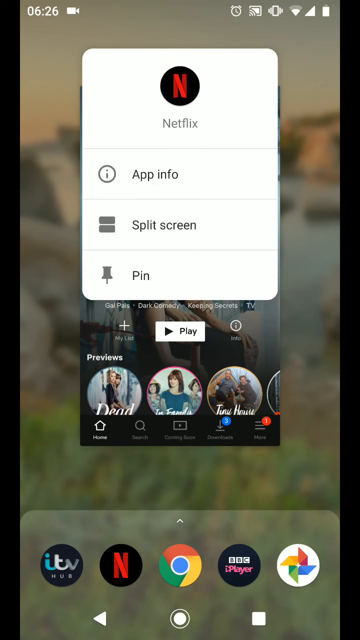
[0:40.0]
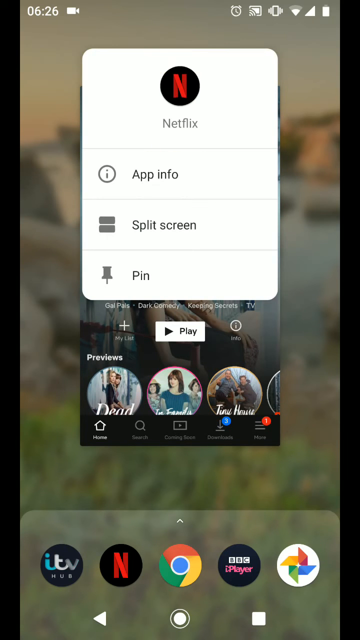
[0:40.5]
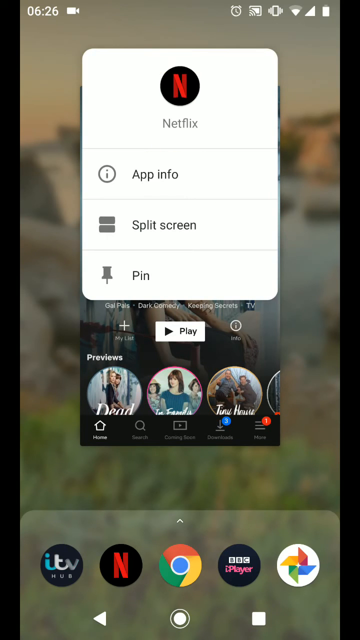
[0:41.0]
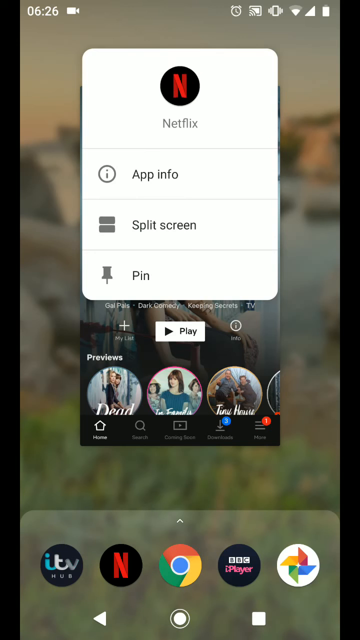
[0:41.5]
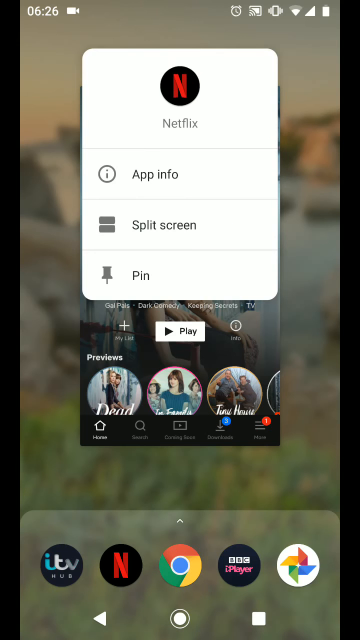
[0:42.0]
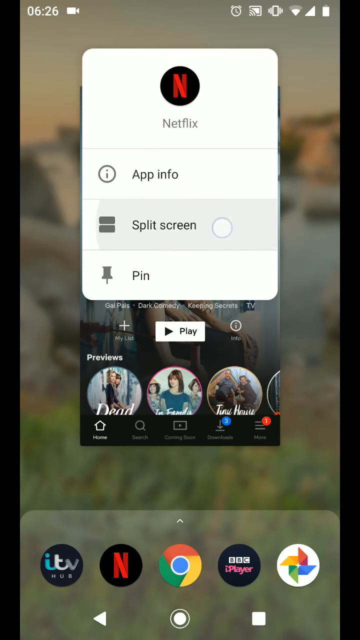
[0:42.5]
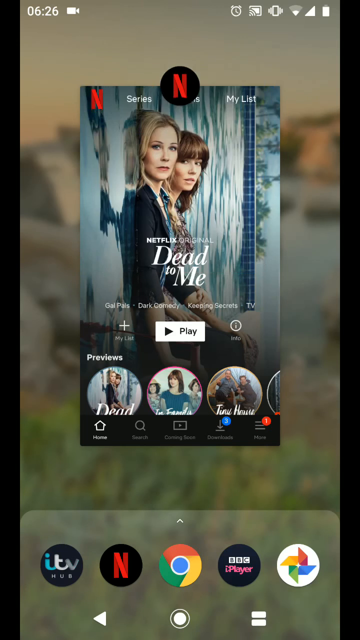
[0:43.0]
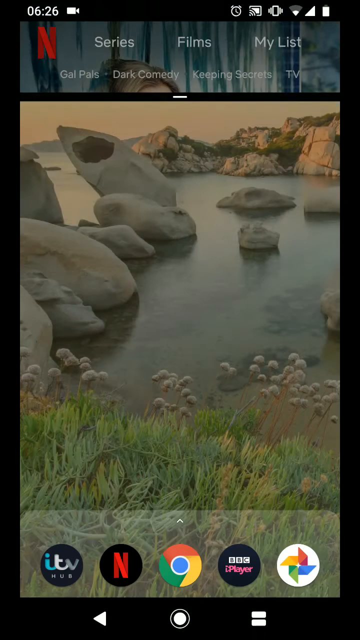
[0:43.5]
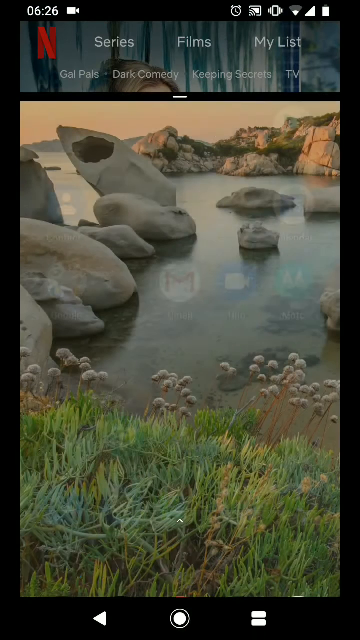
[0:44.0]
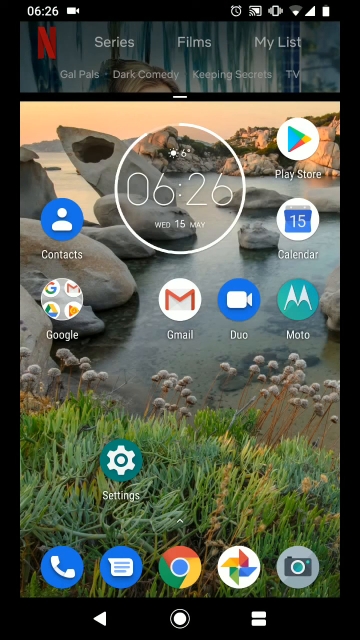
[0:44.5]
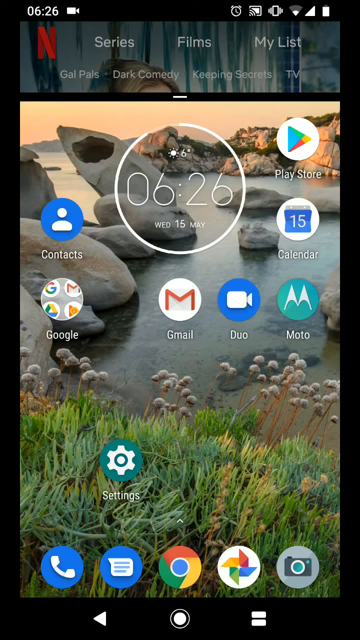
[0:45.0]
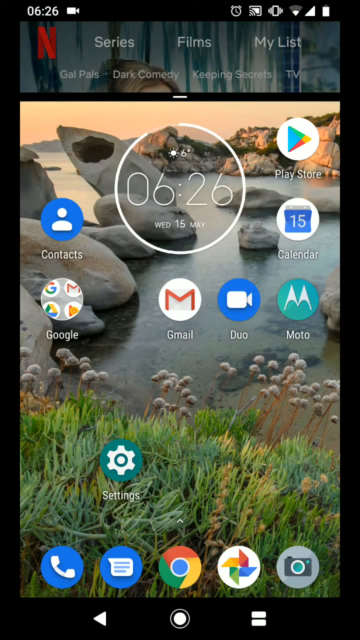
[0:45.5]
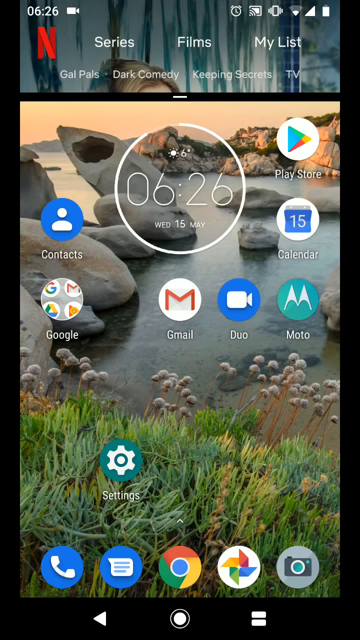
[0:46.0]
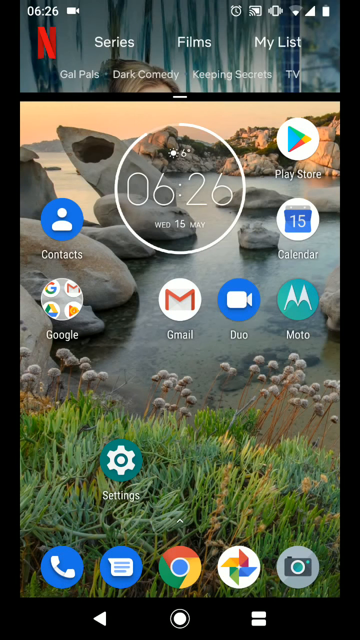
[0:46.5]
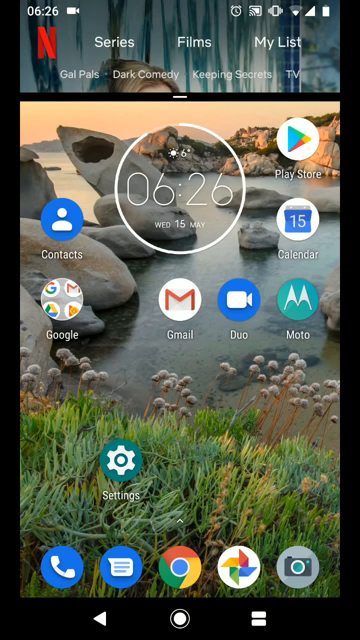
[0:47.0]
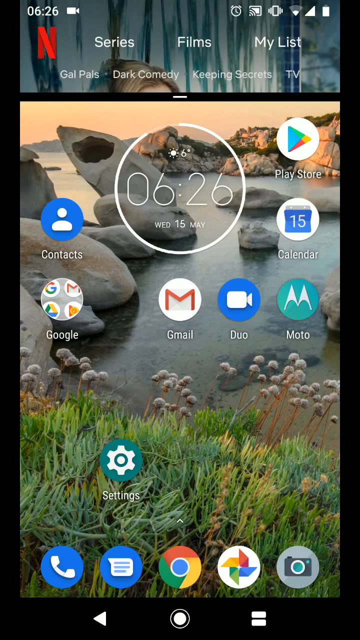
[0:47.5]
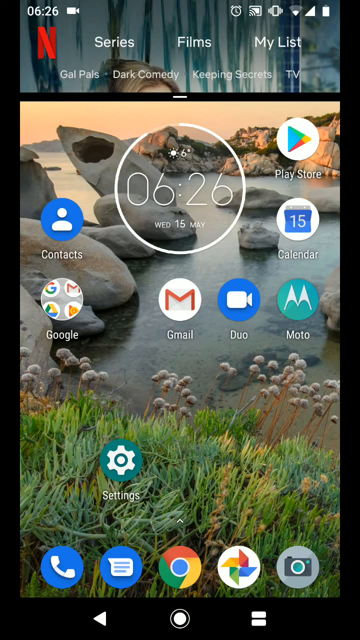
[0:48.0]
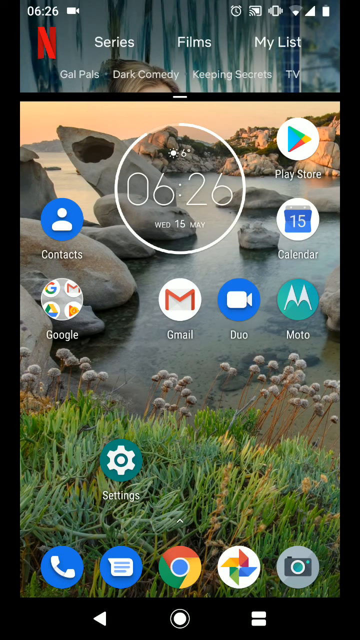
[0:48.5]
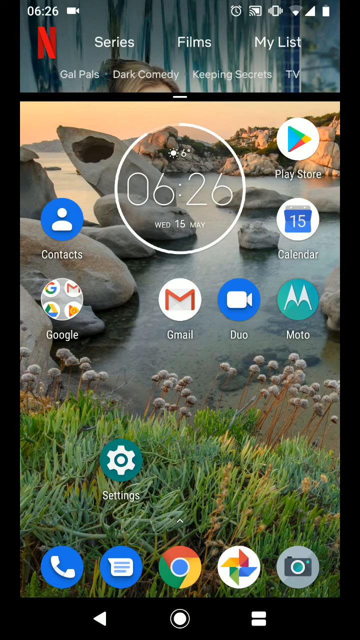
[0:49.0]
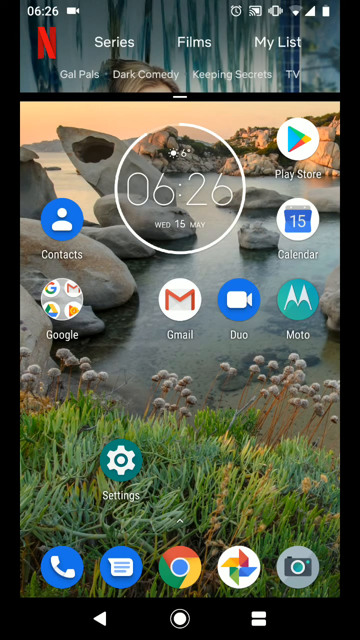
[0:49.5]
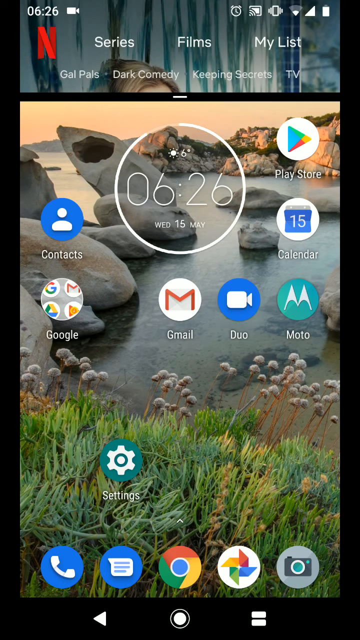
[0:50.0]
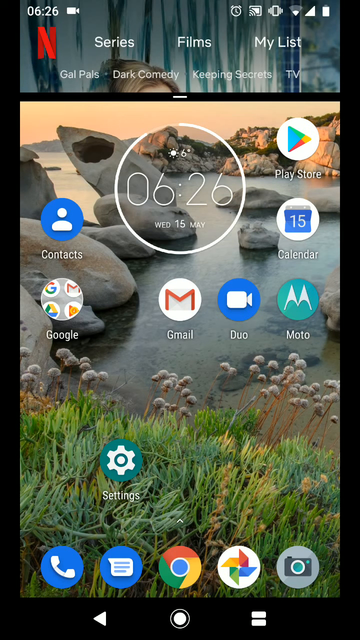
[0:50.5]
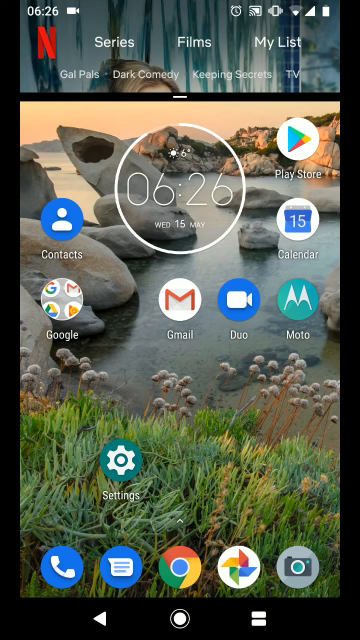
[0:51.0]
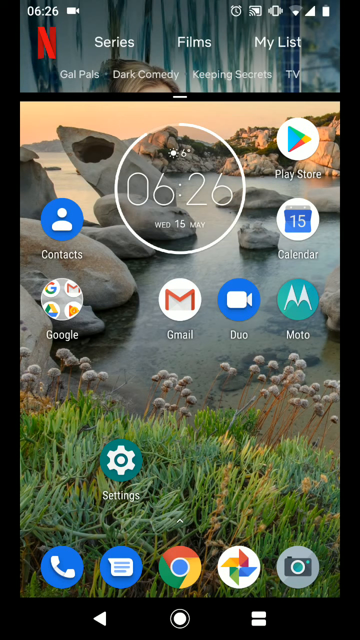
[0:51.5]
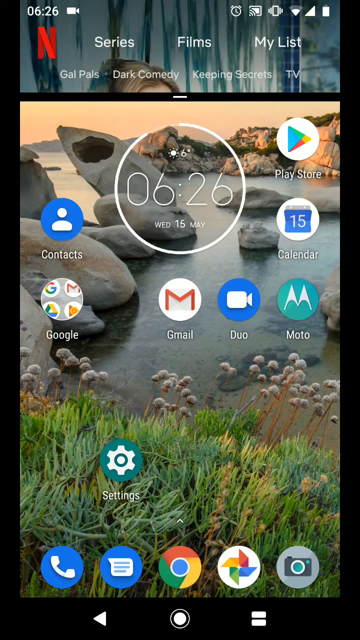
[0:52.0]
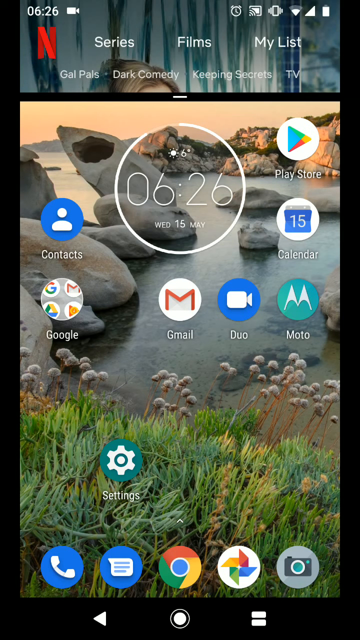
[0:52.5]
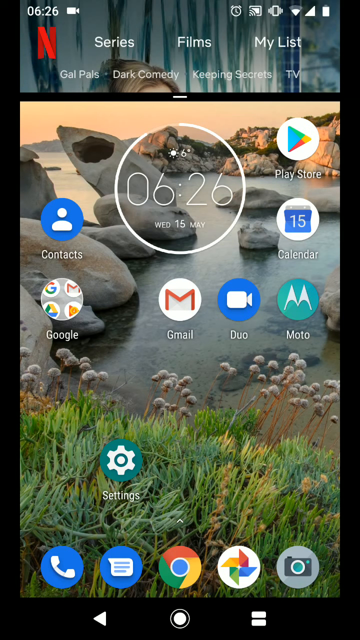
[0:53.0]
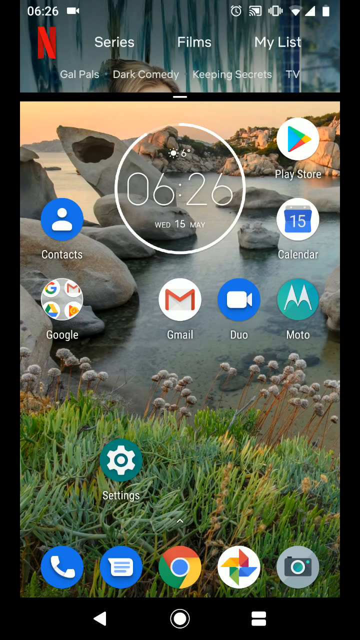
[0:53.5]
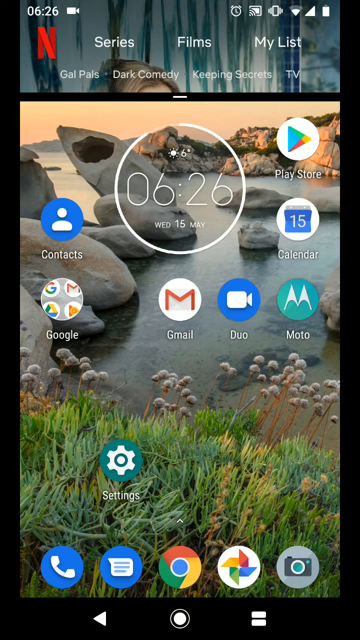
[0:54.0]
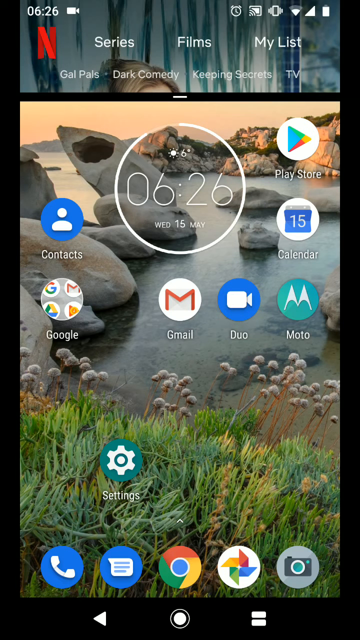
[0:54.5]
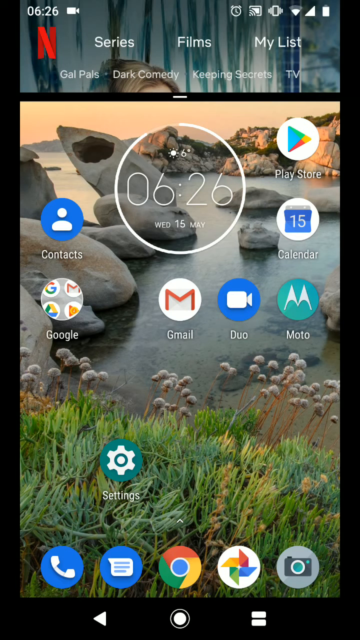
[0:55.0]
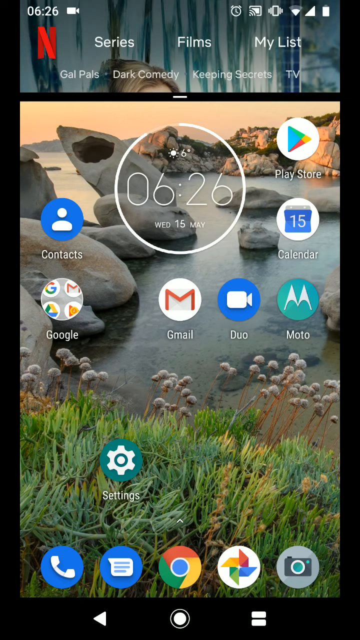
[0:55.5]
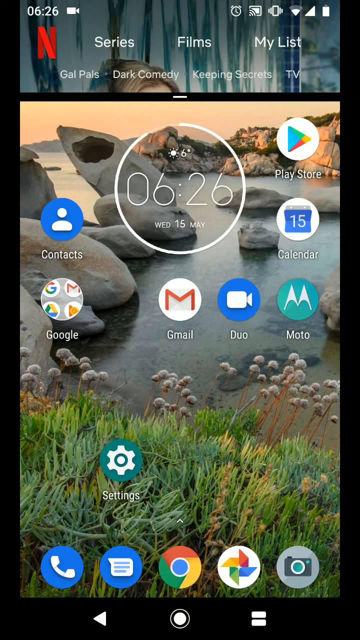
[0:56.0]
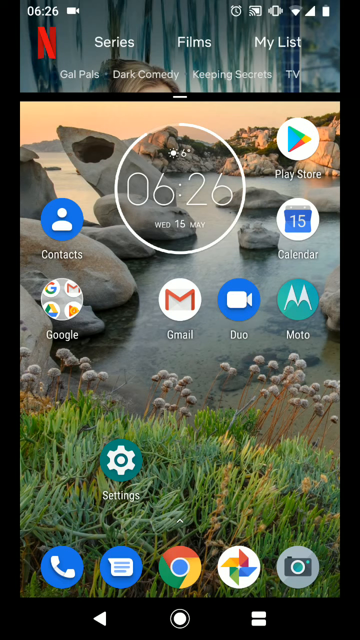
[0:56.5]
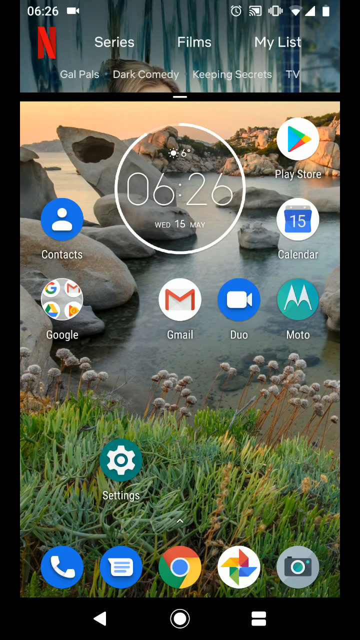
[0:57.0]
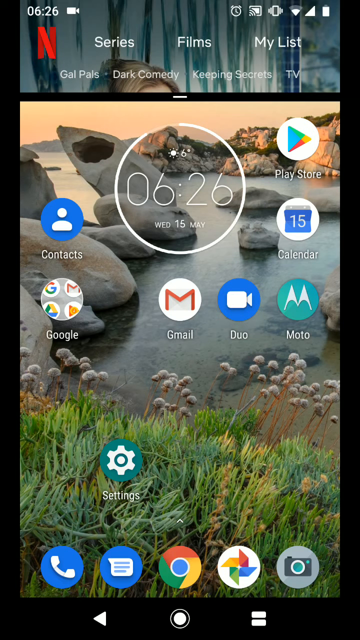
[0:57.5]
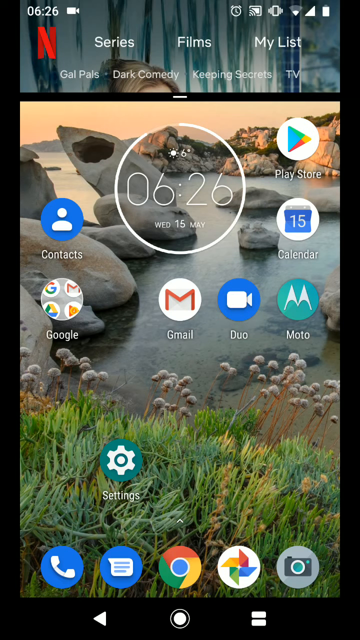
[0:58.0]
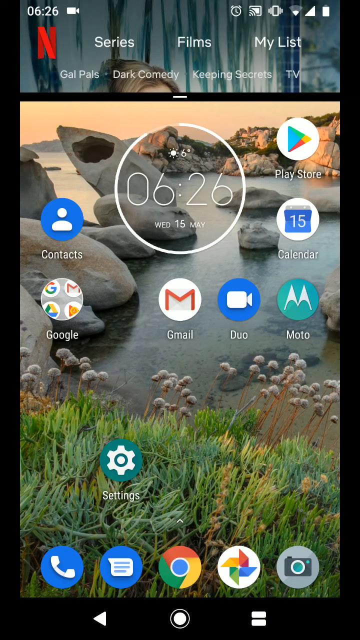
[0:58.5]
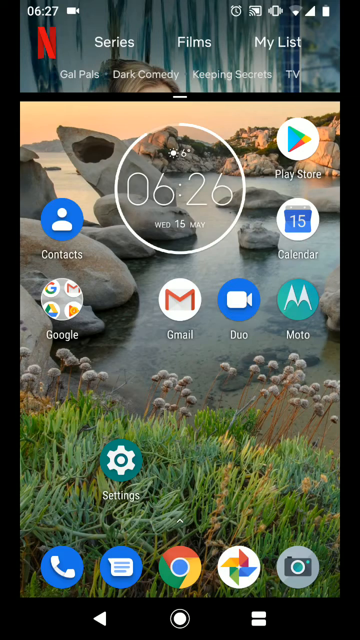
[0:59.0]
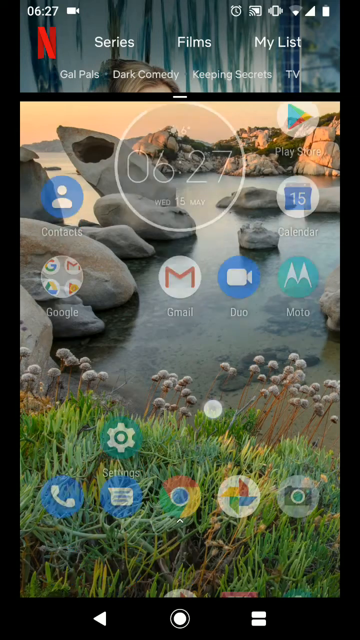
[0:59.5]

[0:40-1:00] The user seems to minimize the Netflix page and return to the home screen, with the Netflix page on top of the home screen. The home screen is shown for a while, with a little section of Netflix showing series, films and my list. The user then seems to navigate back to the Netflix section and click the additional options, which show app info, split screen and pin. The user splits the screen, so Netflix appears in the topmost section with the home page below it.